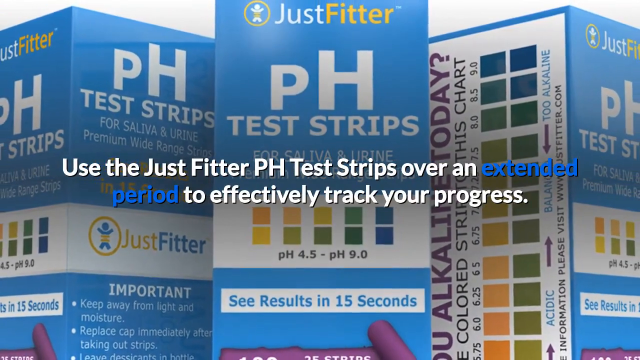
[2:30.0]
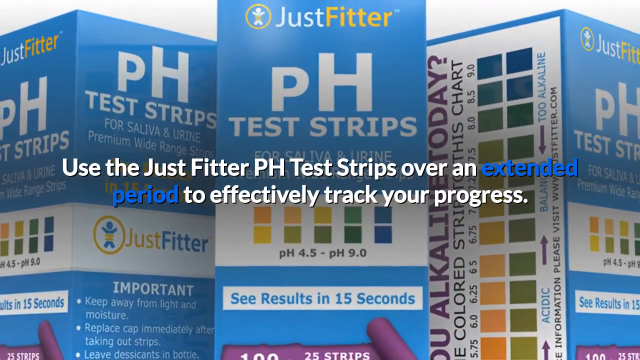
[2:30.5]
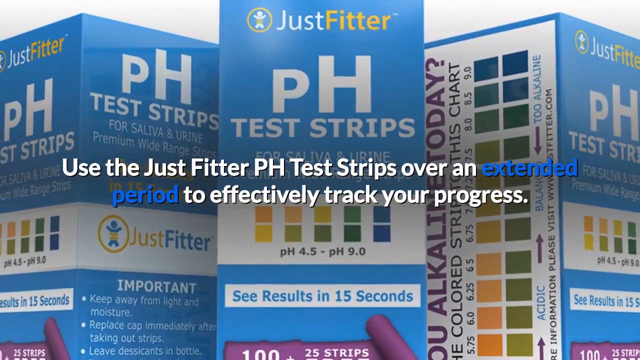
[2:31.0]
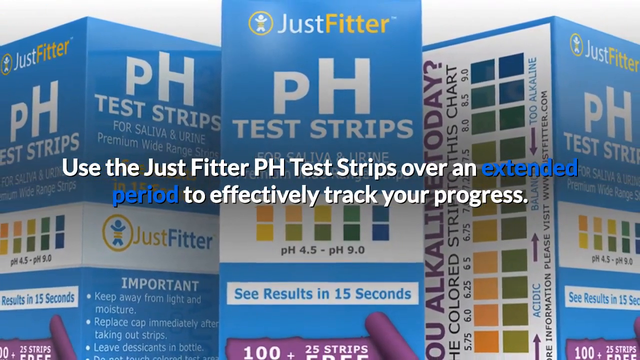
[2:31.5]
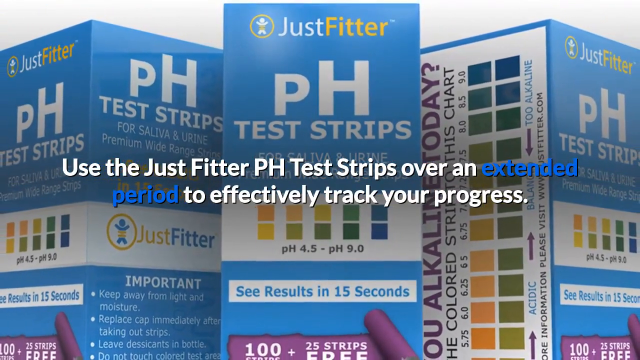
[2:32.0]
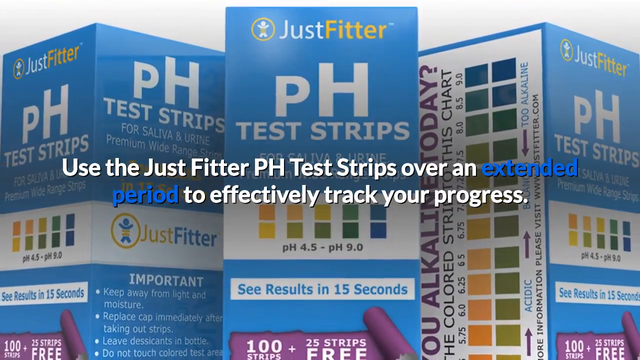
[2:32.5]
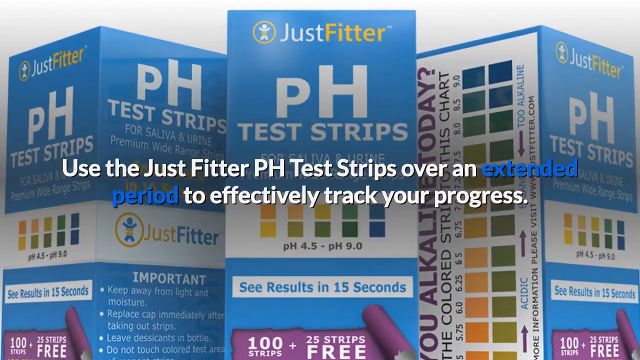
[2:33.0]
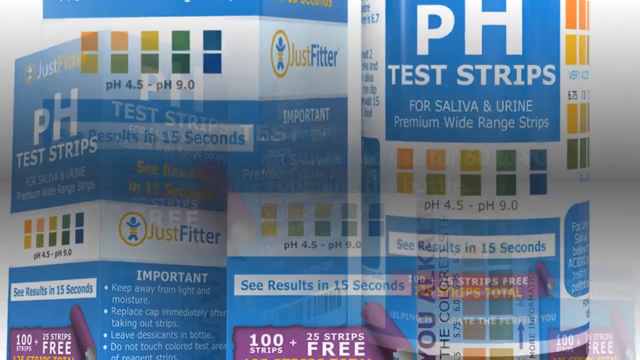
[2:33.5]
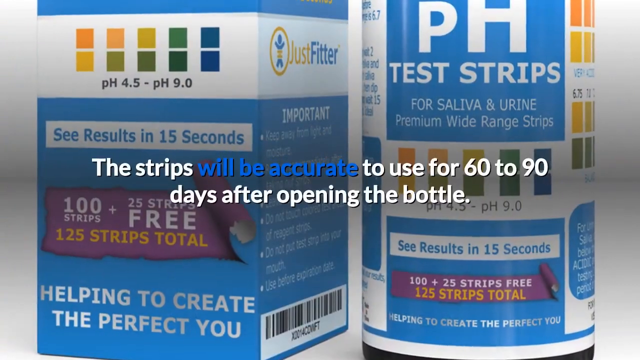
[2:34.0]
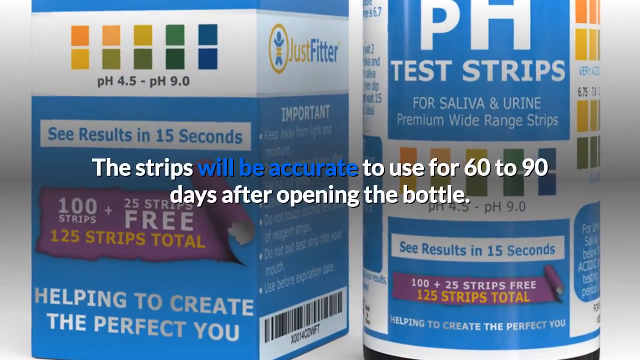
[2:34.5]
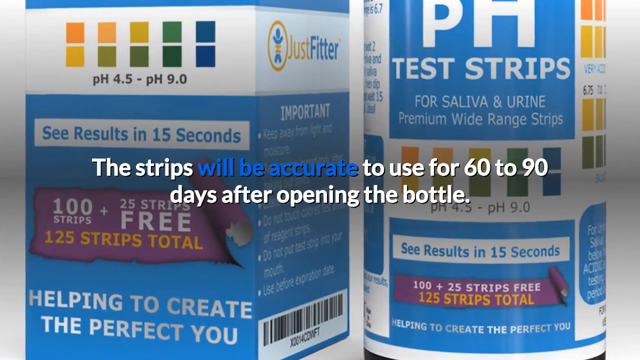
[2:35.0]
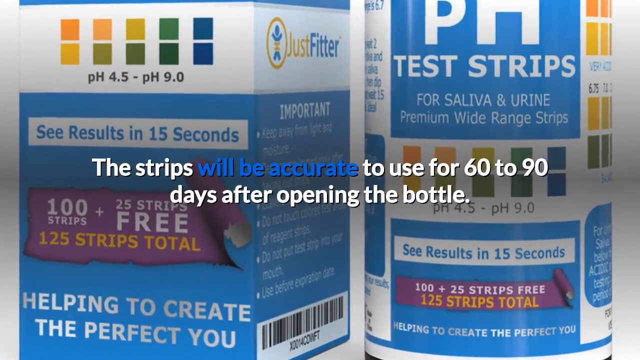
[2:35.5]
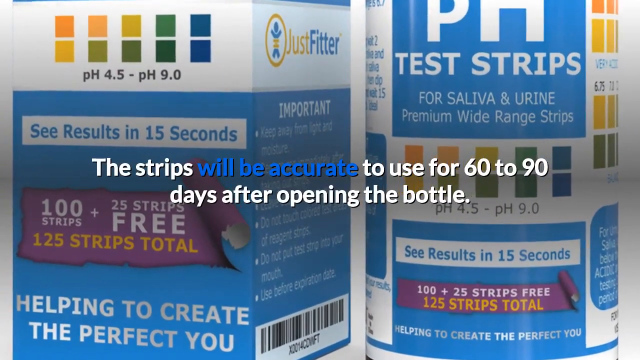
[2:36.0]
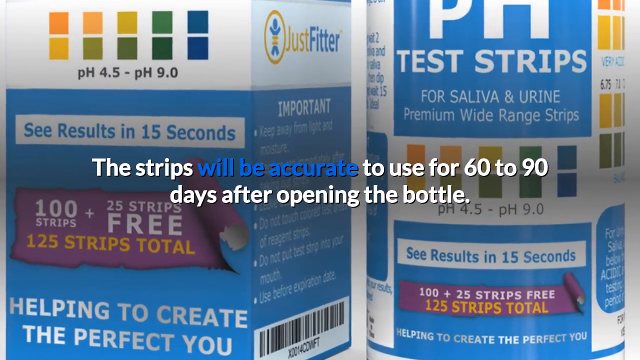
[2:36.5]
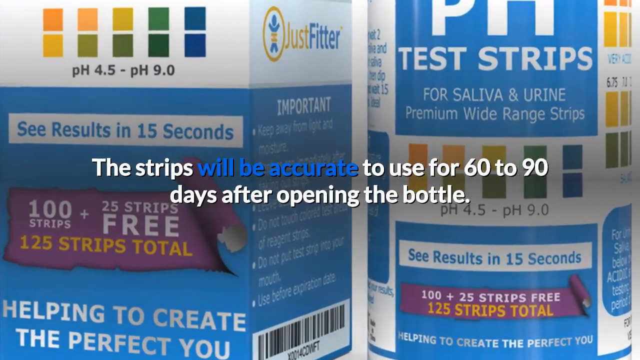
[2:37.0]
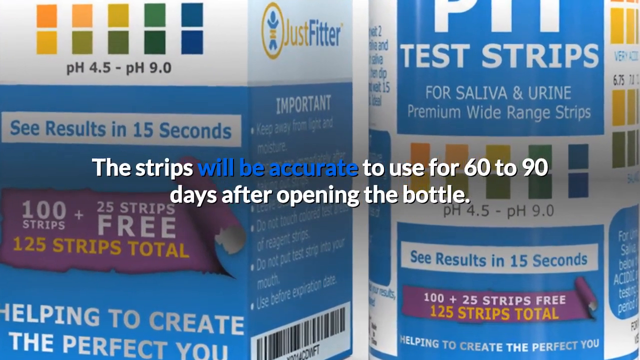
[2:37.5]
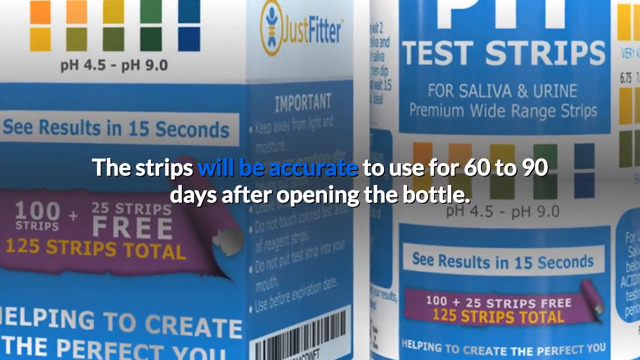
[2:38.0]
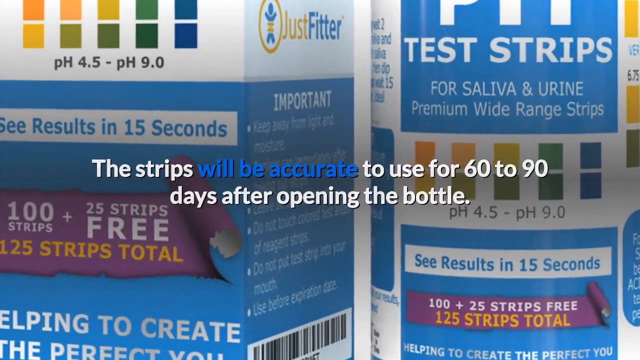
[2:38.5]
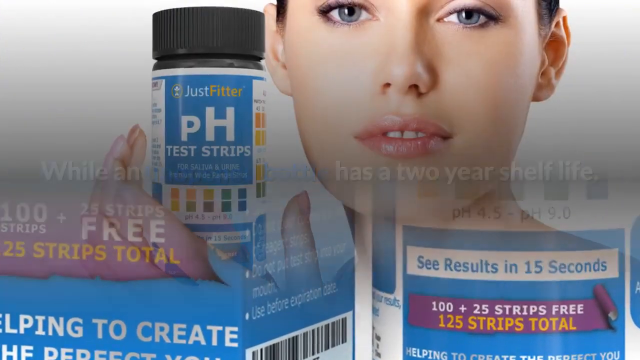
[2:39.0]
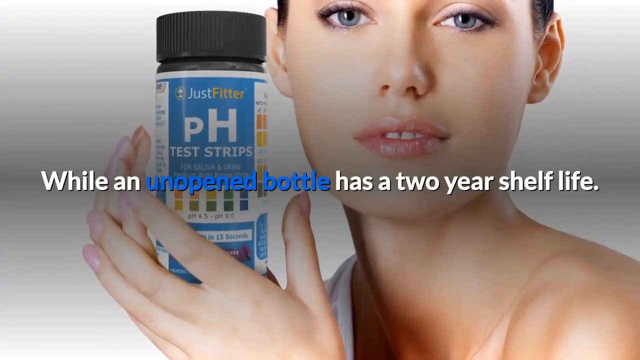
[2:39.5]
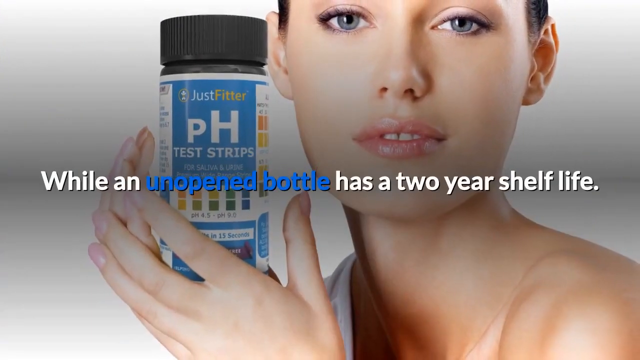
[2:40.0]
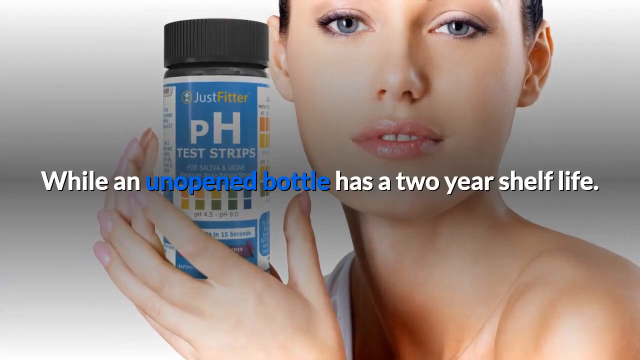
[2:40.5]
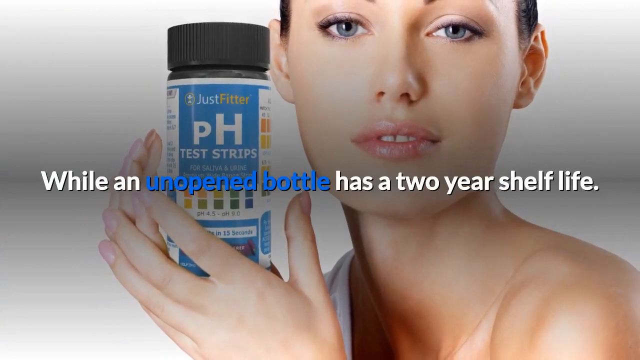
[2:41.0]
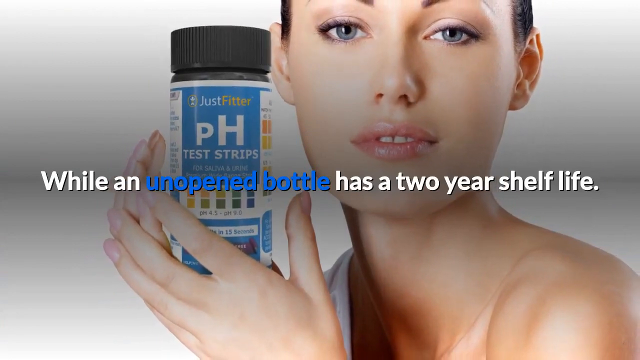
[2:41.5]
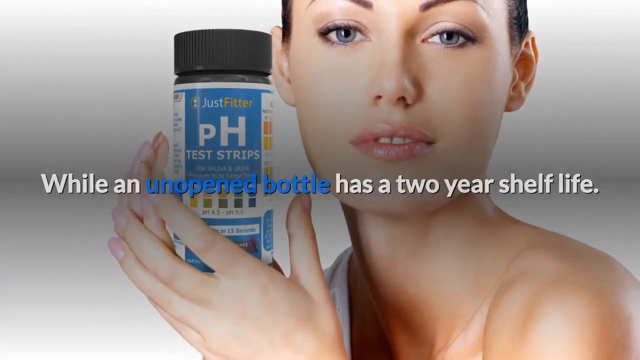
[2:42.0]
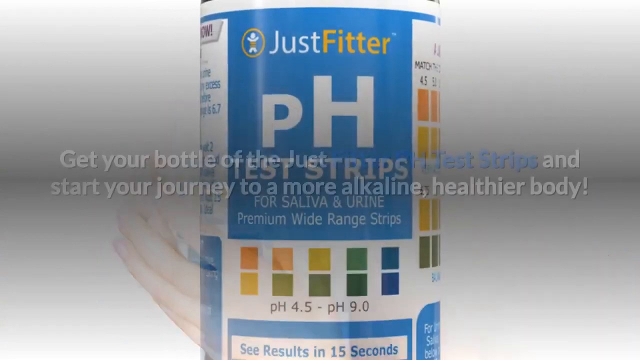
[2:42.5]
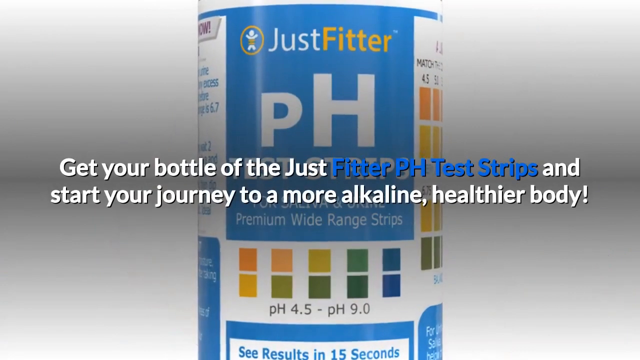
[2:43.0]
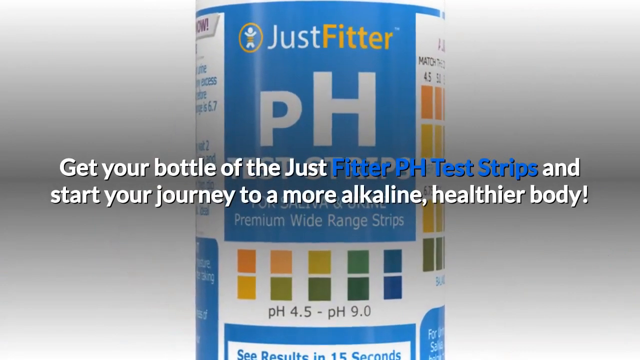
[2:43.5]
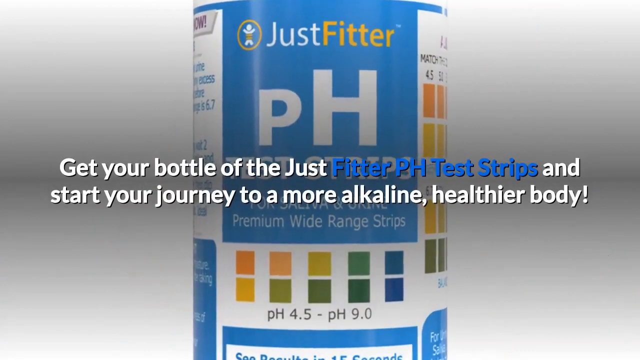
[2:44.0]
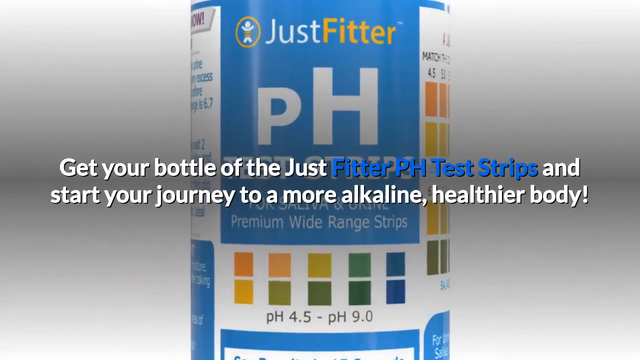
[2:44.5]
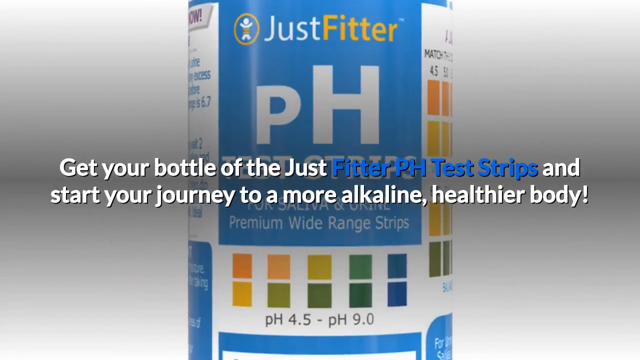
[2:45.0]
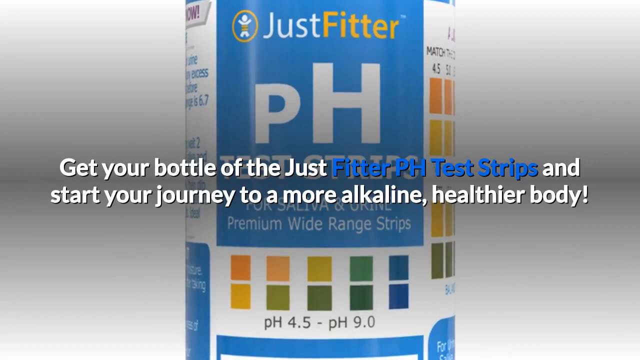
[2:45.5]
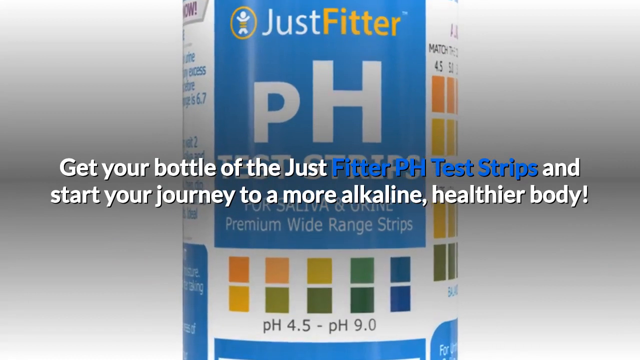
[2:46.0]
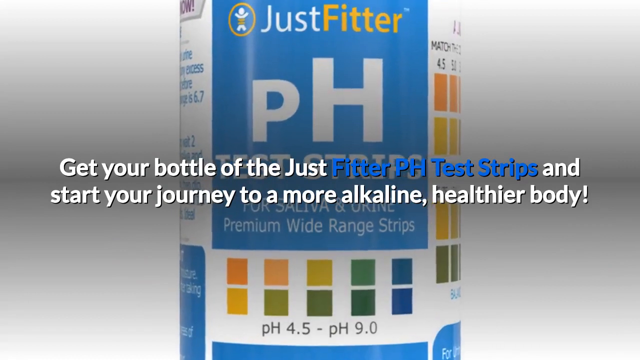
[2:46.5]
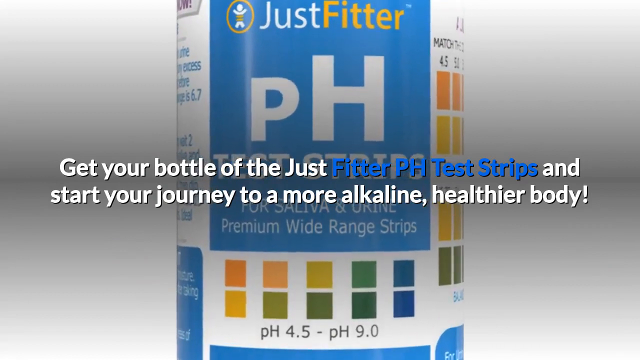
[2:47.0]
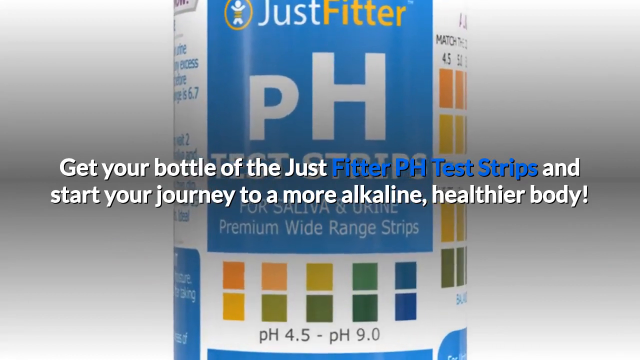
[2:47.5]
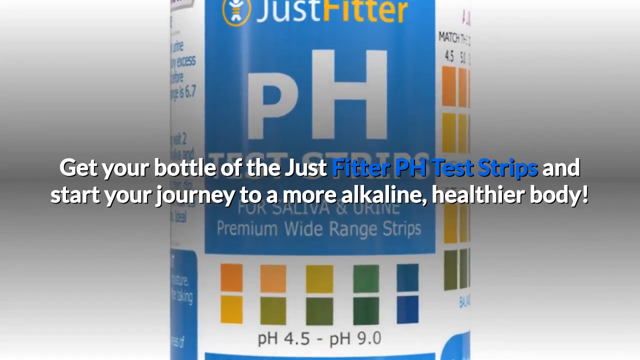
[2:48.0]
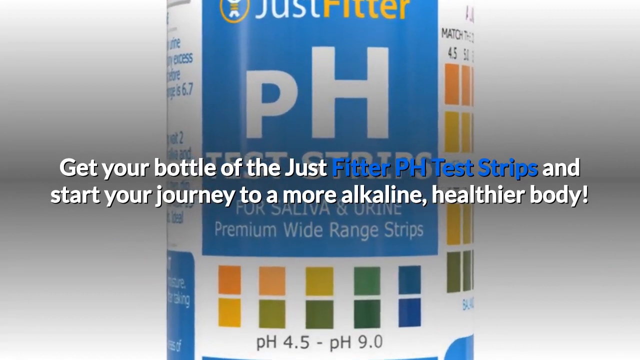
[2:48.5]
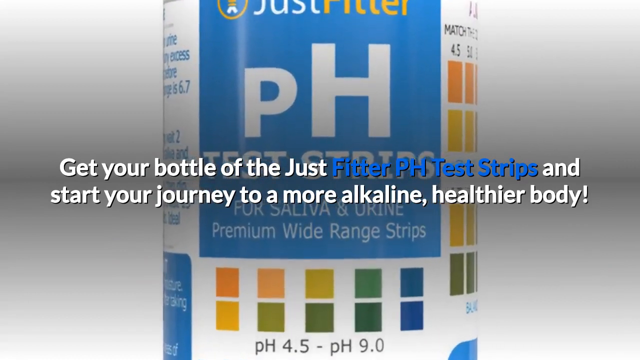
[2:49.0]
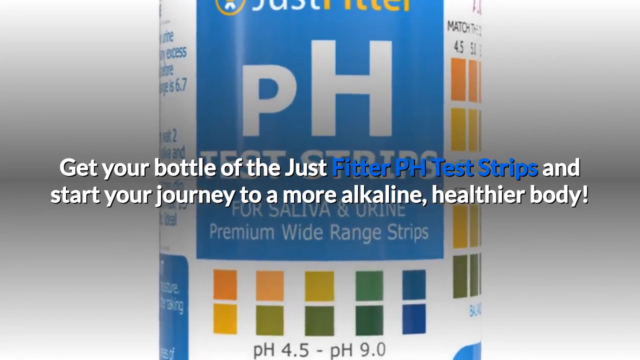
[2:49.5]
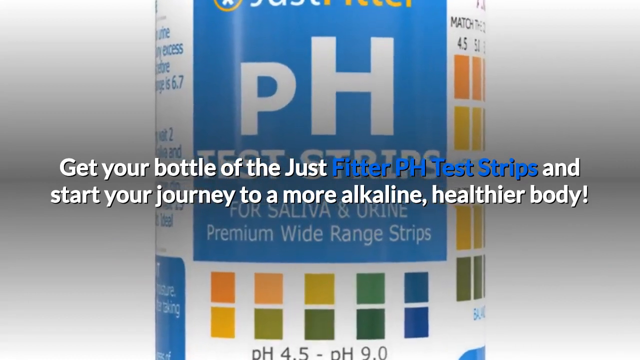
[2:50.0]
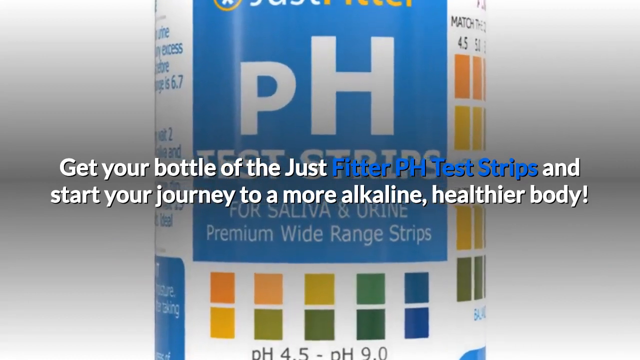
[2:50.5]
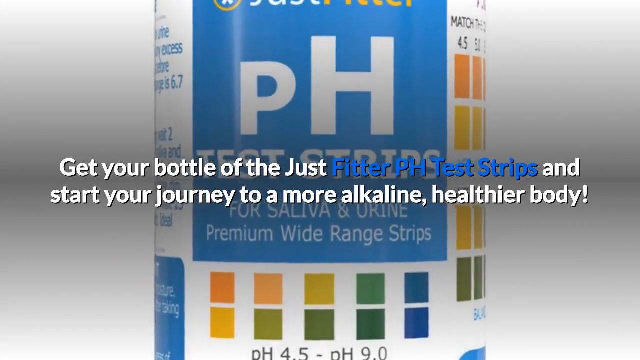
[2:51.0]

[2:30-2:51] The slide of the pH Test Strips boxes continues: three boxes stand side by side, with "JustFitter" on the top of the boxes. Below, text reads "see results in 15 seconds," and in the middle of the screen text reads "use the JustFitter pH Test Strips over an extended period to effectively track your progress." The camera zooms out from the image, and the video cuts to an image of the box and the bottle of the pH Test Strips with text reading "the strips will be accurate to use for 60 to 90 days after opening the bottle." On the left side, the box says "100 strips plus 25 strips free, 125 strips total." It then cuts to an image of a woman holding the bottle in her hand, with text in front reading "while an unopened bottle has a two-year shelf life."